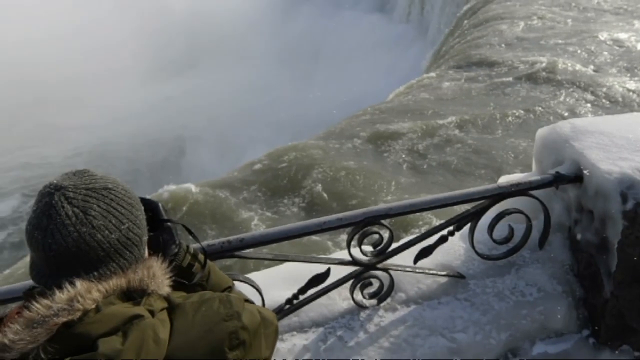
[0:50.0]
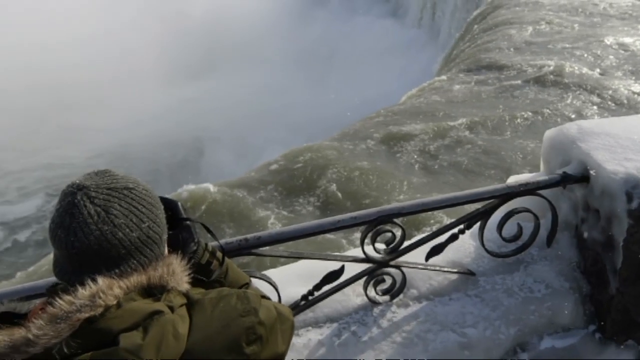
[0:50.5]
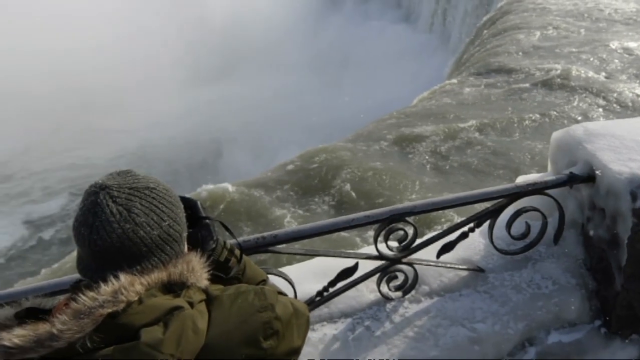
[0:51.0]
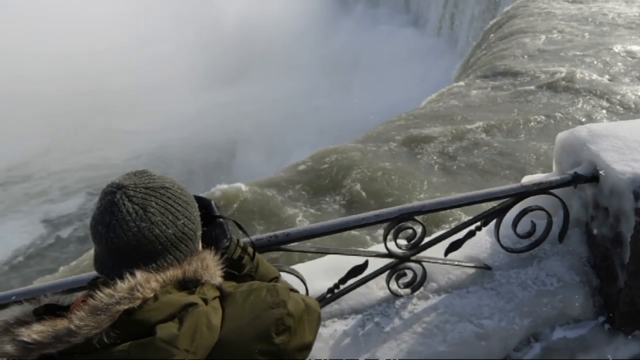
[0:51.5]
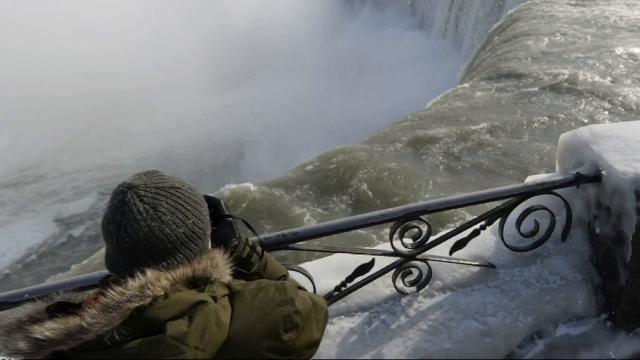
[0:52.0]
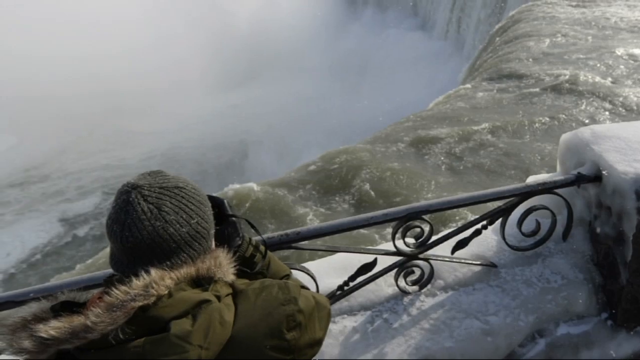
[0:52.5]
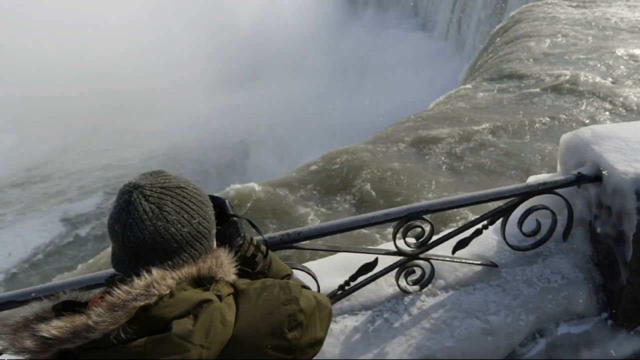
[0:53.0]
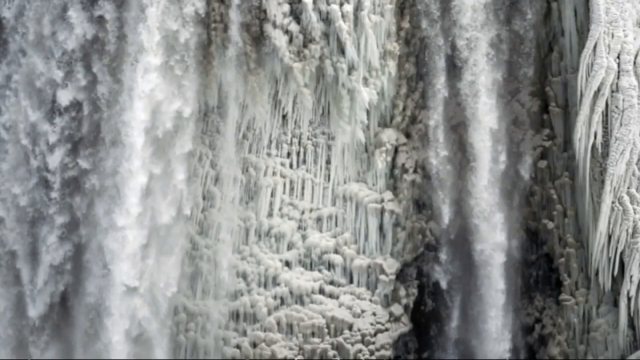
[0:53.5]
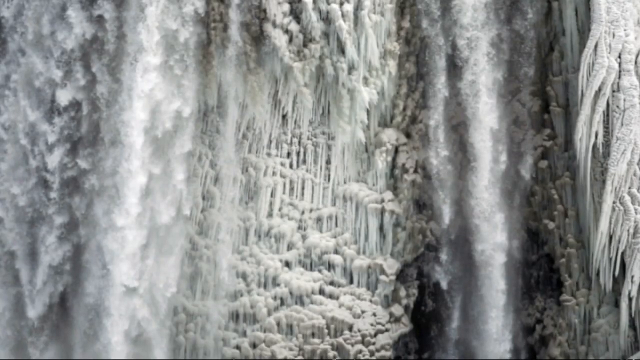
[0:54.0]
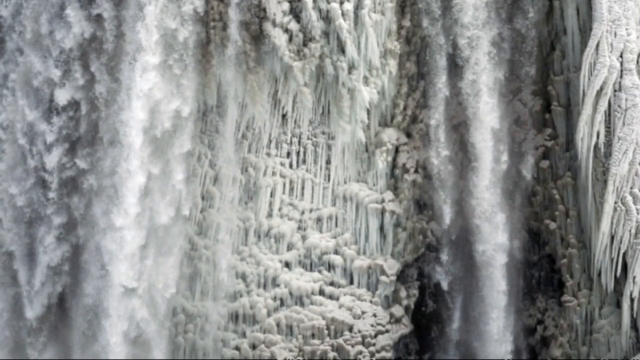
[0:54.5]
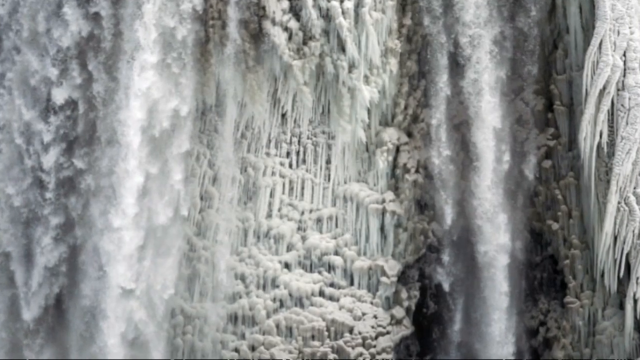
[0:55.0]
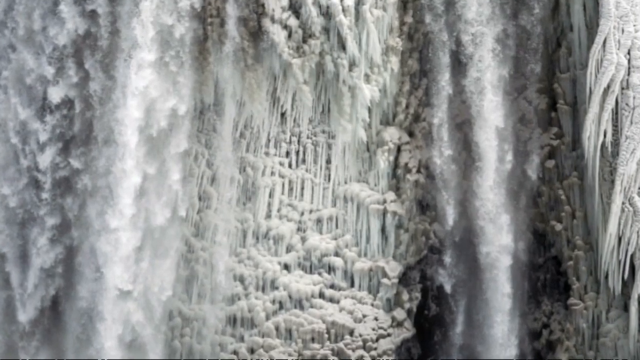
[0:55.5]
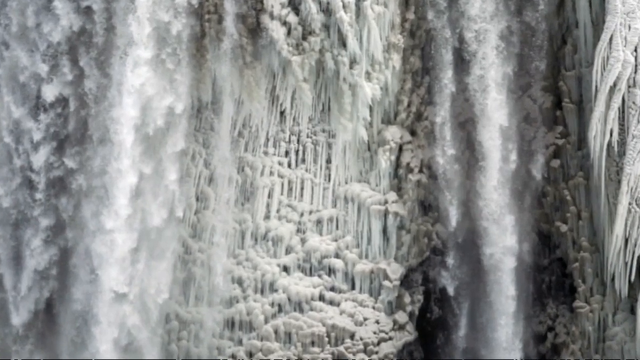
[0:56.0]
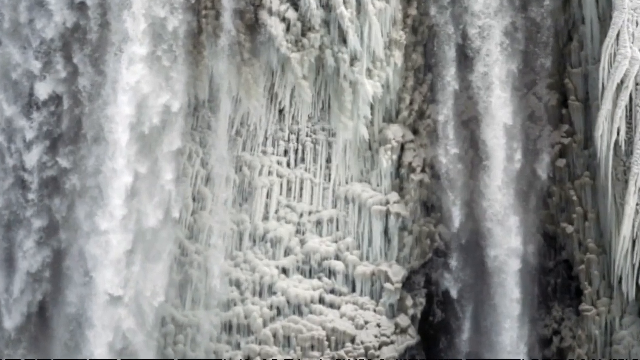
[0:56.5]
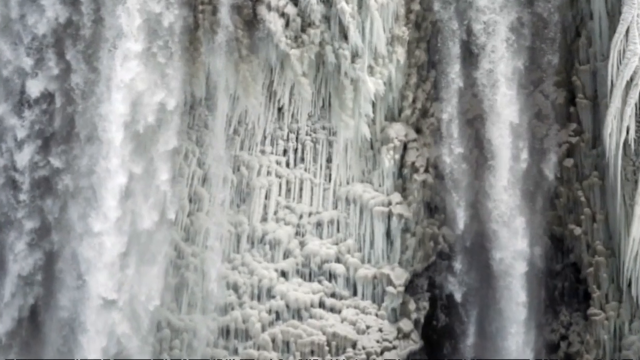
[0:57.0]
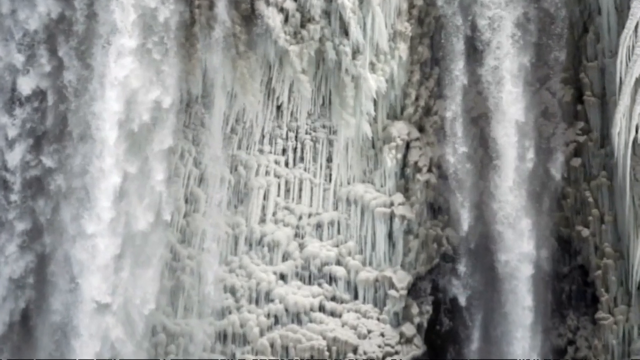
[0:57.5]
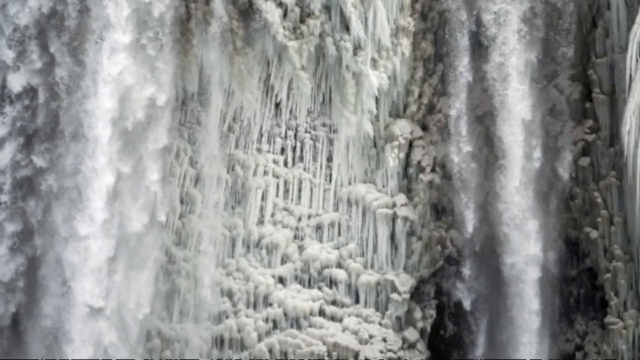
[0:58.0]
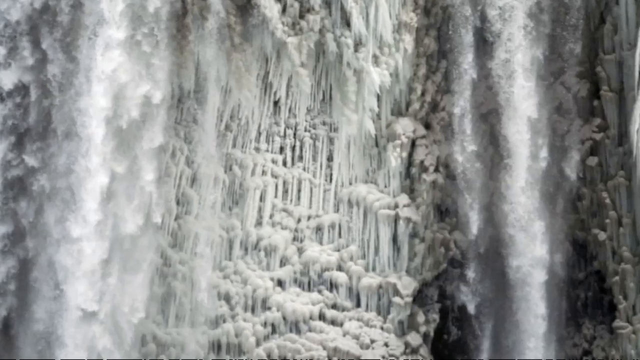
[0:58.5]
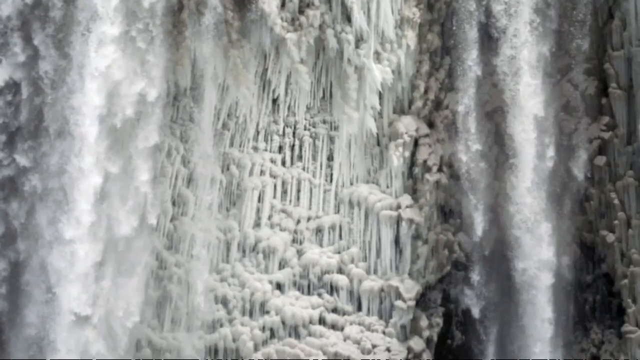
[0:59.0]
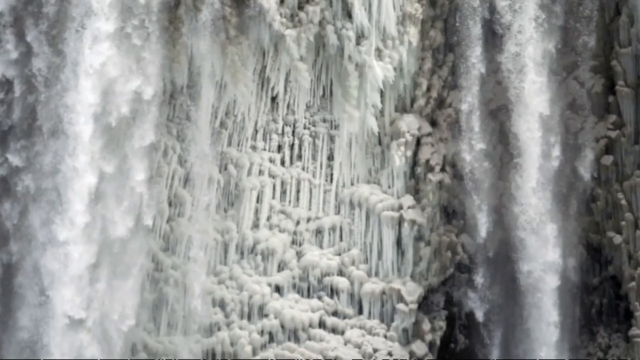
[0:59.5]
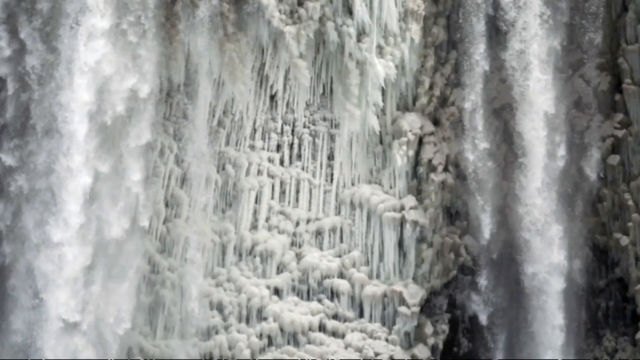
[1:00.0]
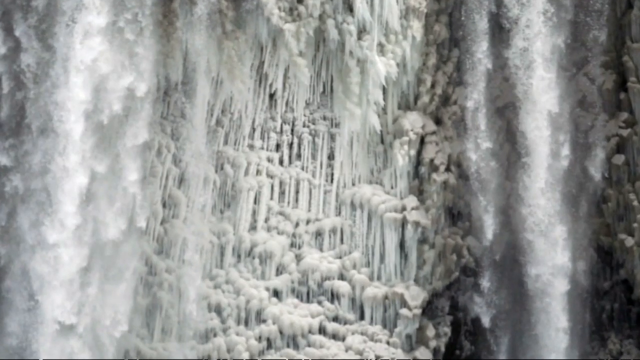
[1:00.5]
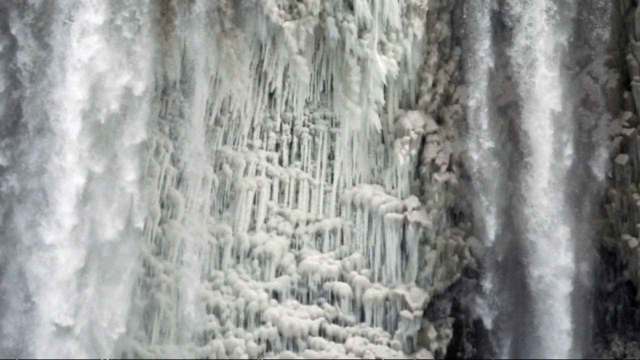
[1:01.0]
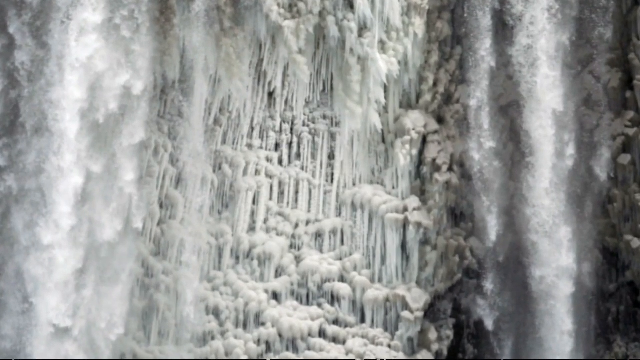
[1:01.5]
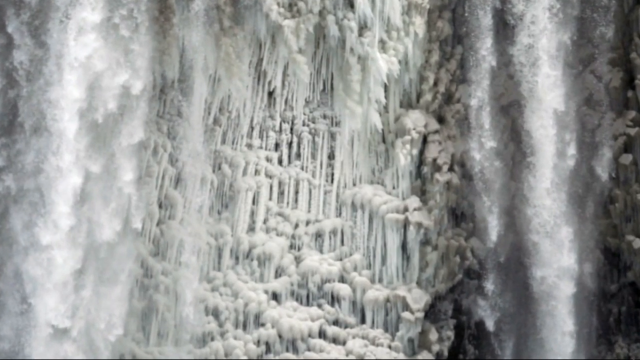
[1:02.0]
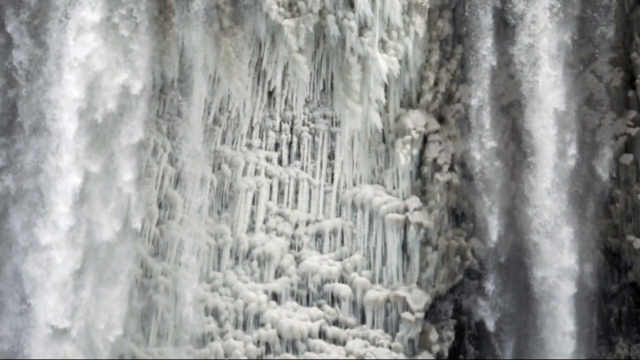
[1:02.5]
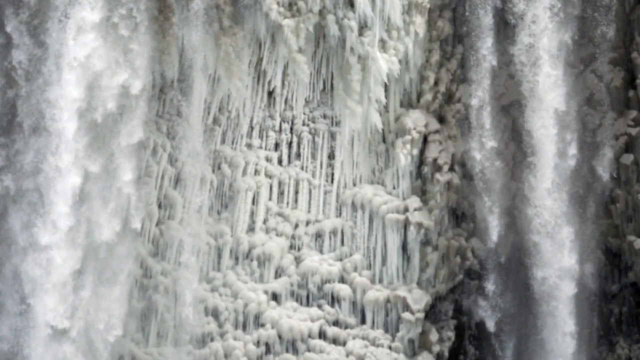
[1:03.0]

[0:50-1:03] The person in the green jacket looks over the railing, followed by another shot of the waterfall: a much whiter frozen landscape, much less cascading, that kind of looks like an avalanche. A shot over the waterfall follows, then what appears to be a drone shot of the waterfall, which is thicker, whiter and more frozen. There is sort of greenish water in the shot with the railing and the person, apparently a woman, while other water is very bright white and seems to be white water frozen in place, with some black in the background. She looks over what appears to be a deep pool of water; the distance is hard to see, a misty greyish-whitish-blue, and it drops off into a very deep chasm, apparently the bottom of the waterfall. There is a soft zoom during the drone shot, and in the shot of the person filming there is a zoom-in at the beginning and then a zoom-out. The edges of the image show less bright white ice and frozen cascading water than the center, and there seem to be two separate streams of thick white cascading frozen water on the left and right of the image.